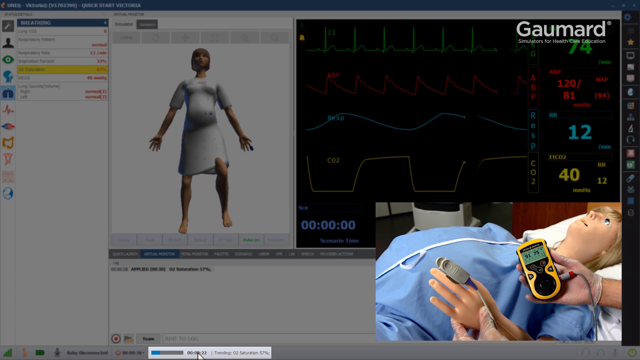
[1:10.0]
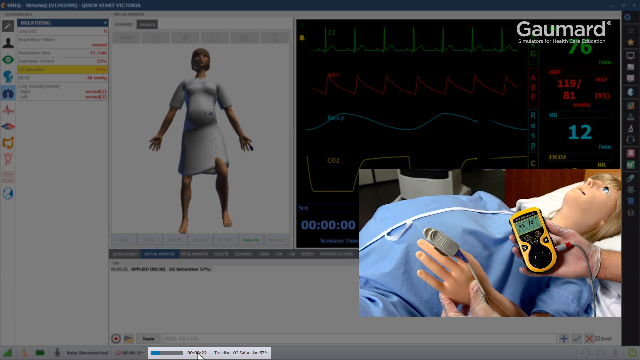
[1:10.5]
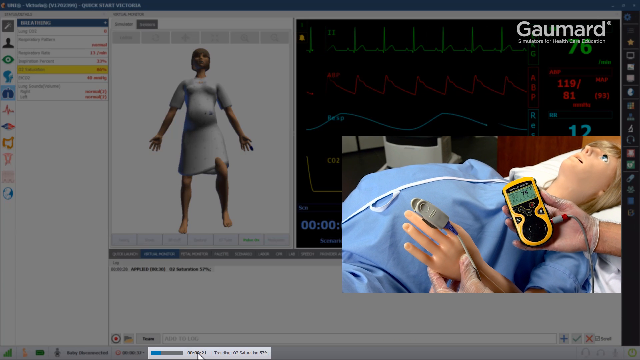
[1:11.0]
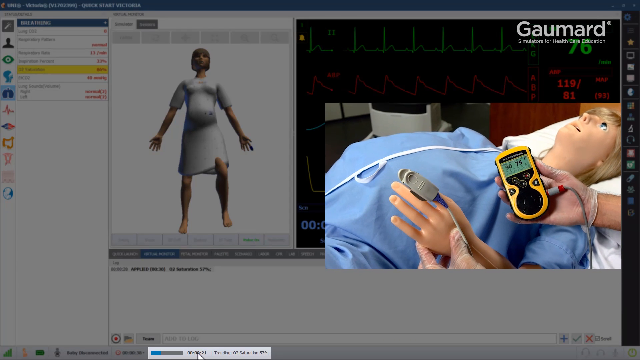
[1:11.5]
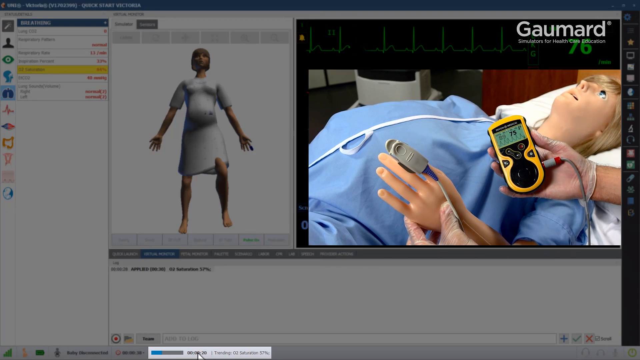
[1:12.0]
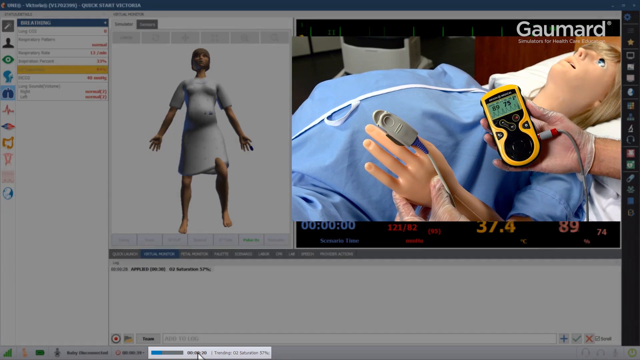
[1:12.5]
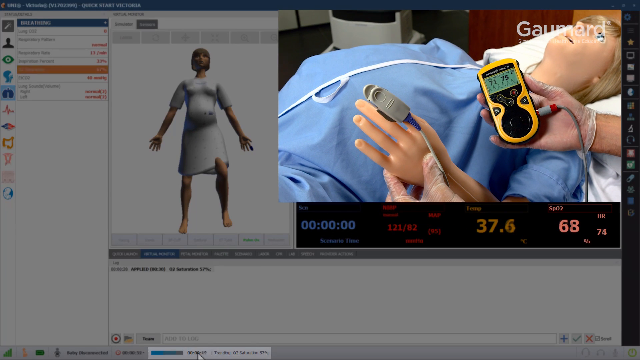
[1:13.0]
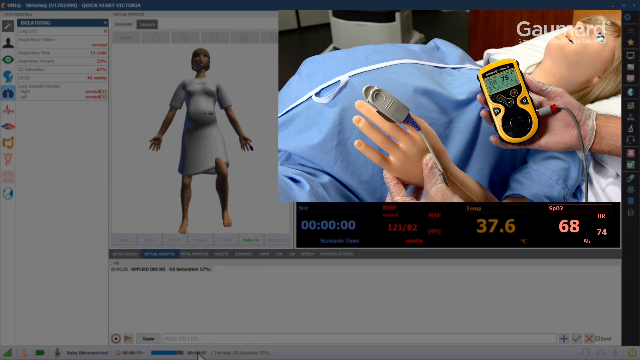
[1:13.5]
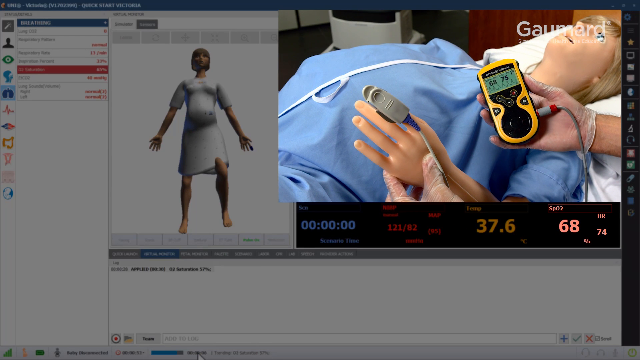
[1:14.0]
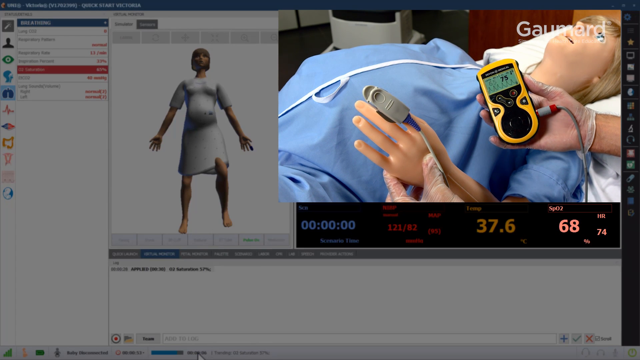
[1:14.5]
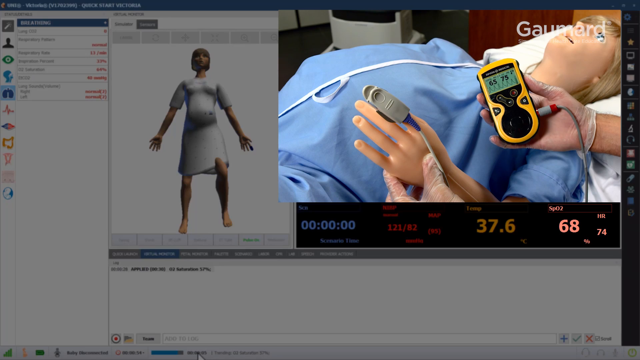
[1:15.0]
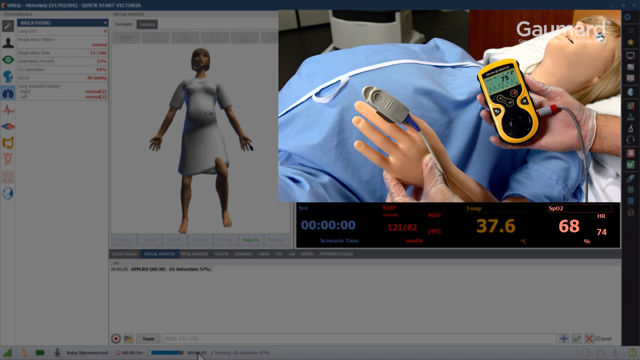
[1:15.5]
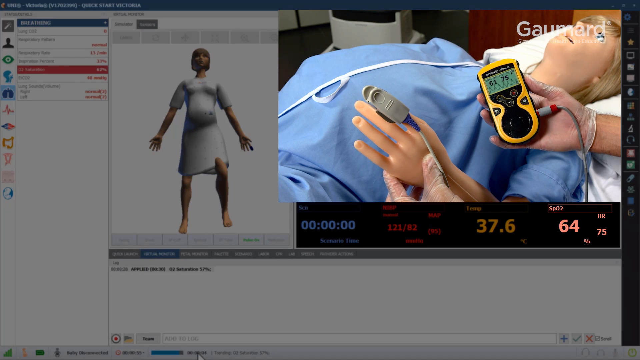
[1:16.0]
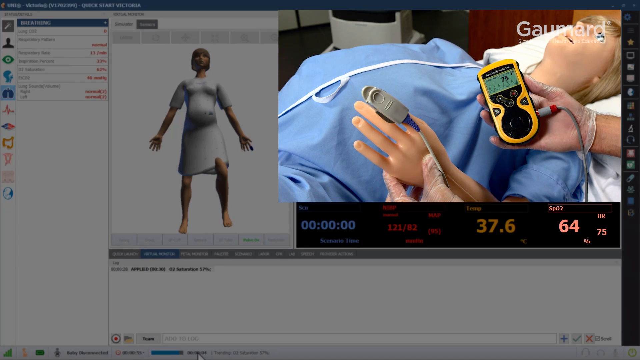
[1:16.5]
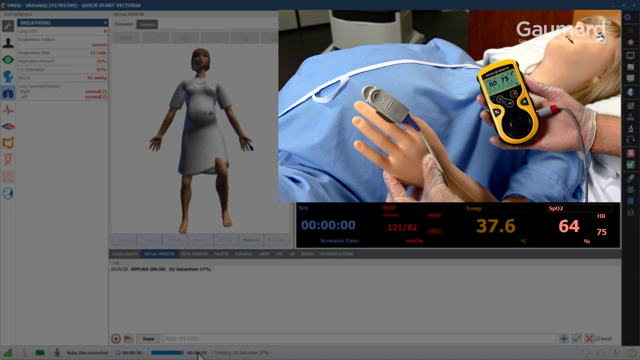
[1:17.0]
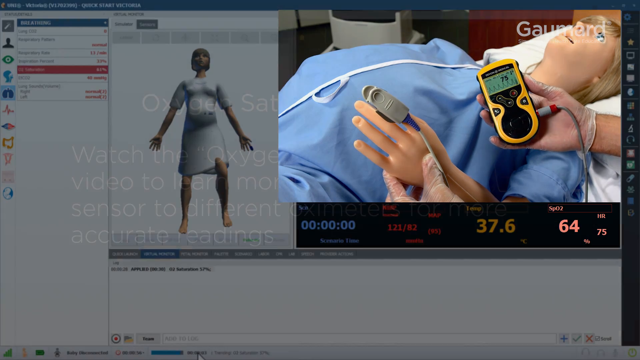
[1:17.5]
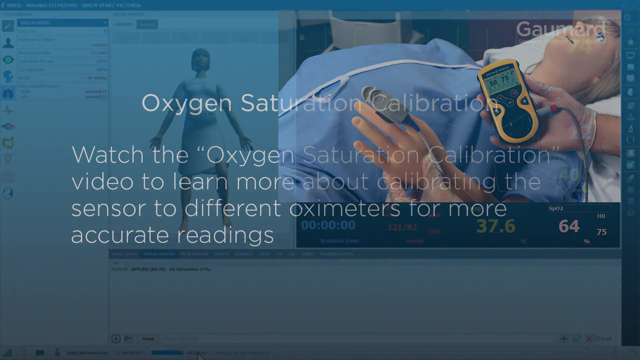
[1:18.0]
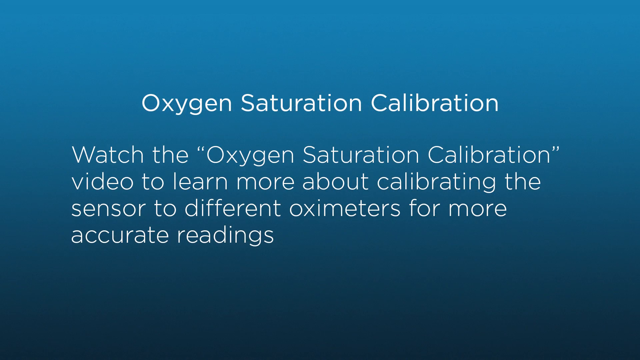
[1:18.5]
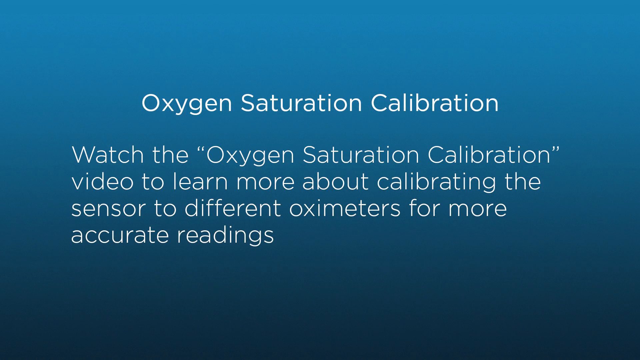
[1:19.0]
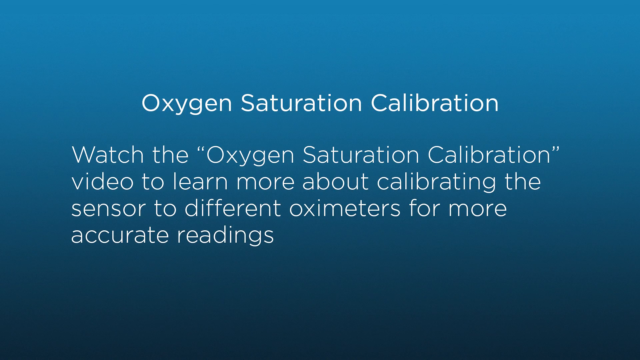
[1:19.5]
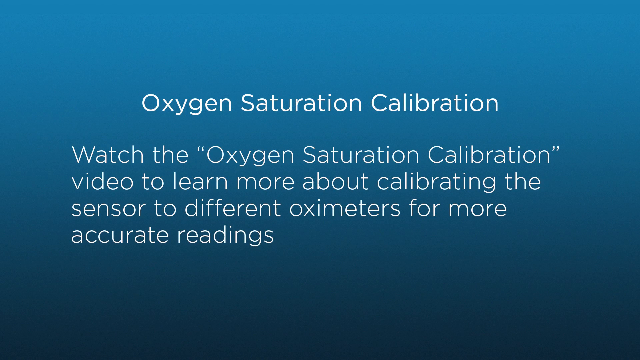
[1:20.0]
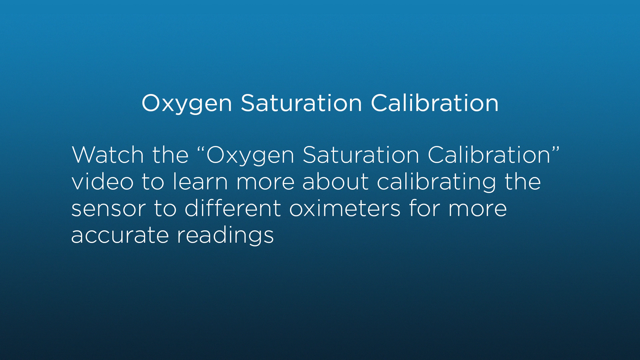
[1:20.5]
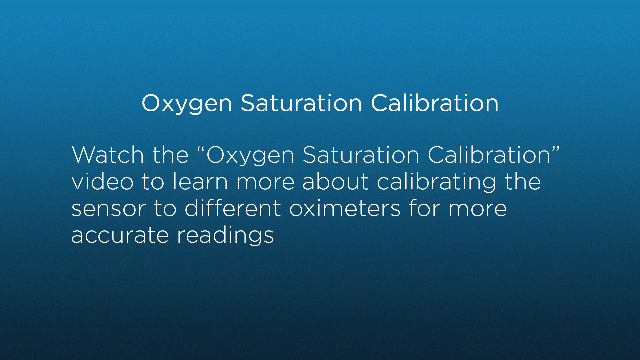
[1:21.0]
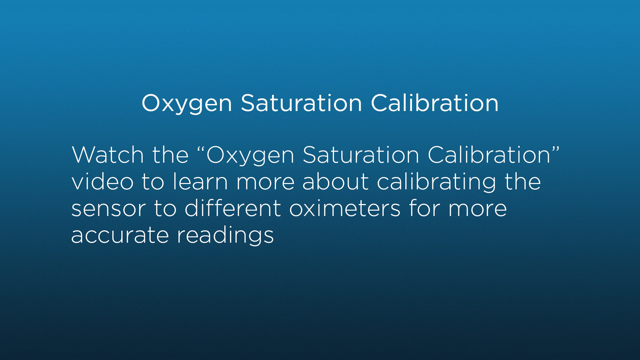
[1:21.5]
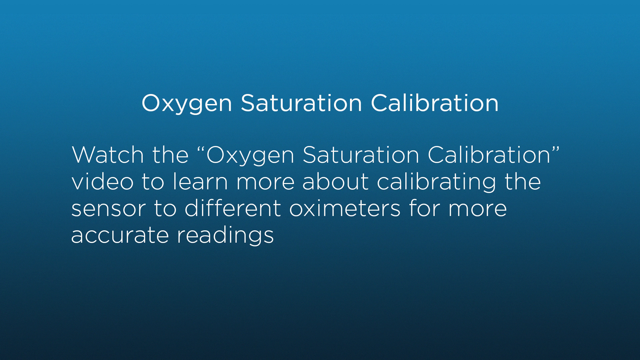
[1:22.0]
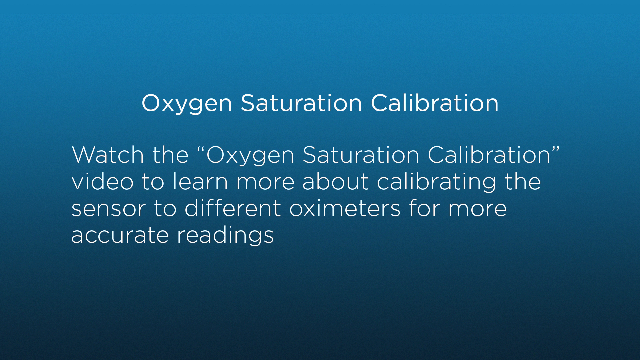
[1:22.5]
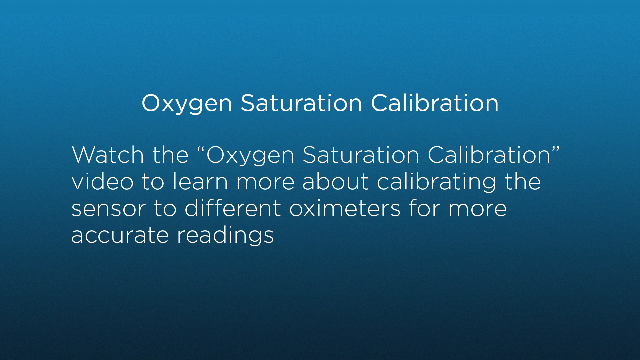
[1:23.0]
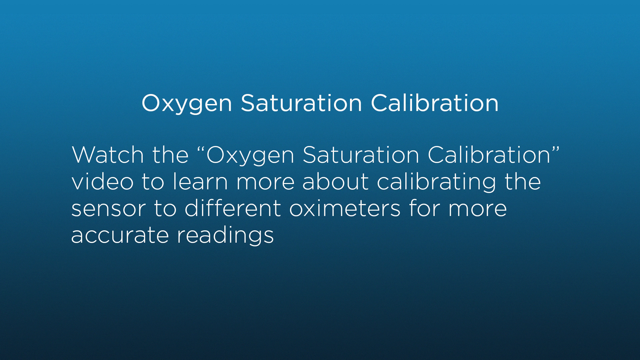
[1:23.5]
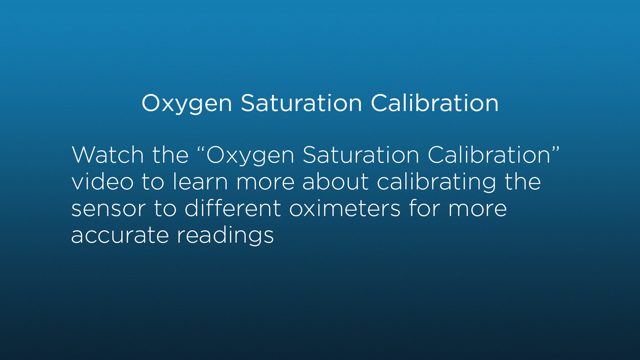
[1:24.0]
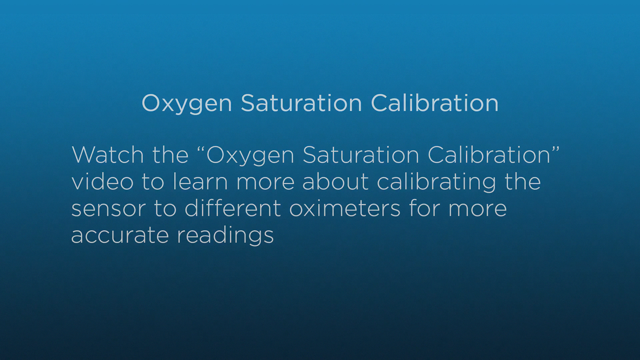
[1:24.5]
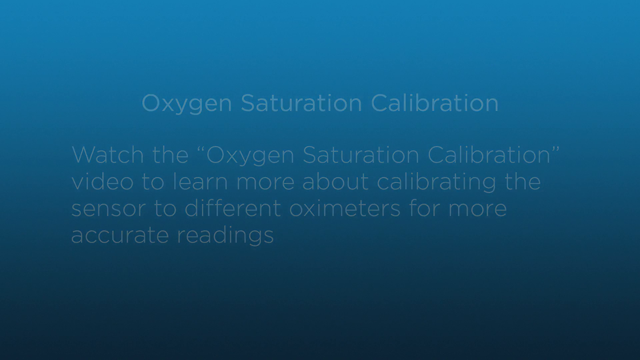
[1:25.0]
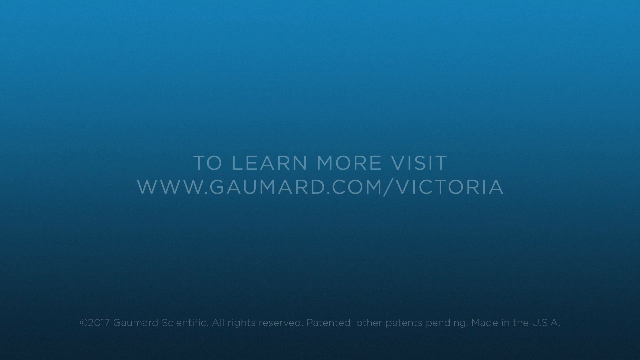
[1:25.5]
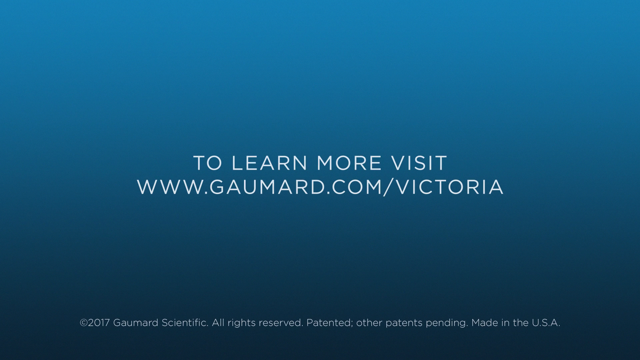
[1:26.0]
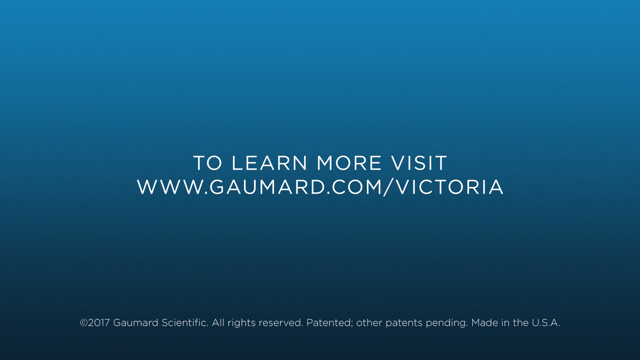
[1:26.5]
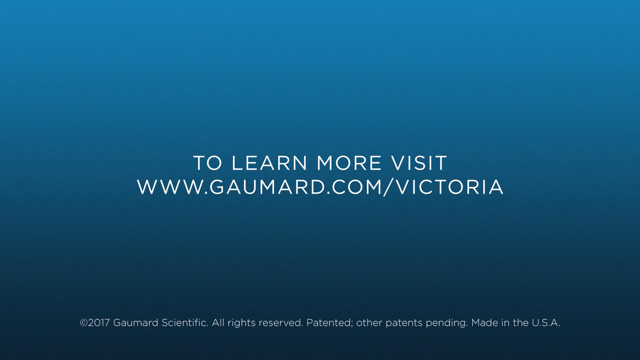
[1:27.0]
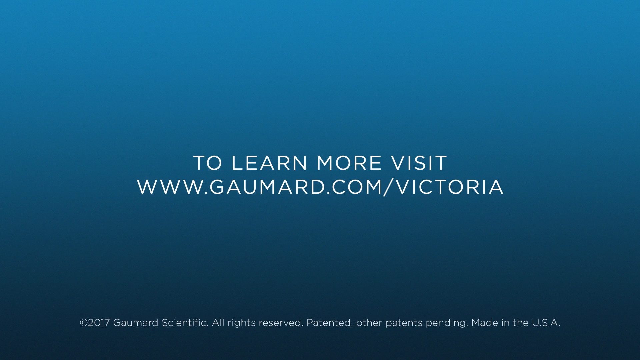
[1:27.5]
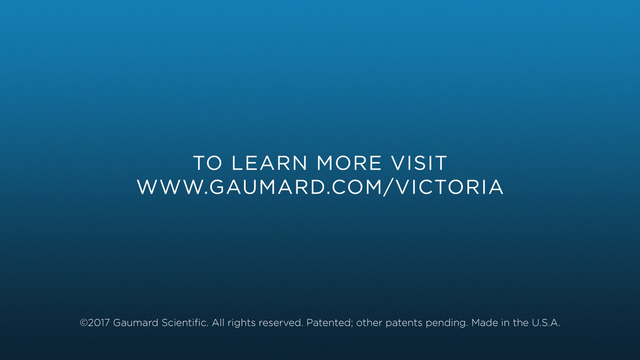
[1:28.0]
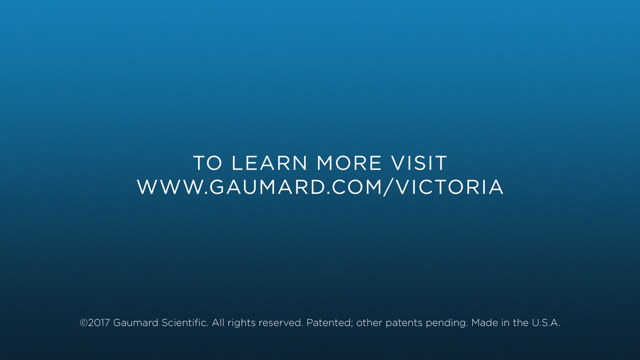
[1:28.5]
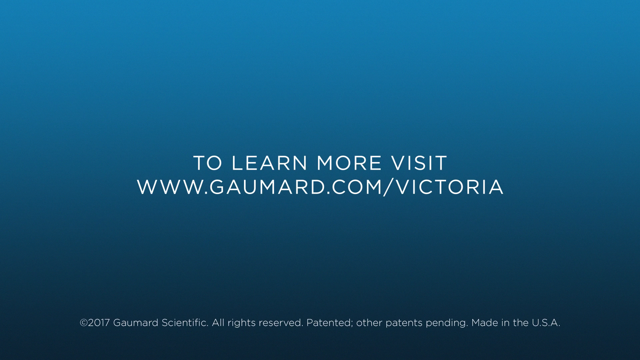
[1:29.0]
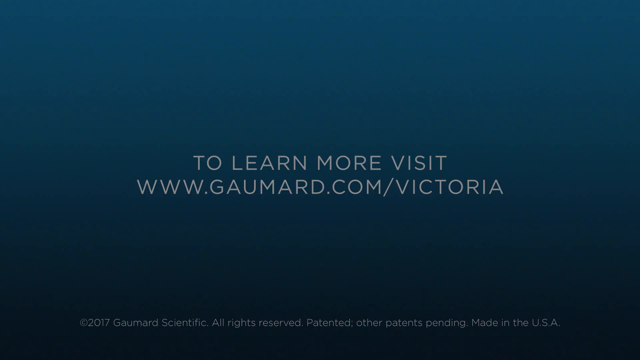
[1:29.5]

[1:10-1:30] The test continues with a patient being monitored, and the readings from the device are visible.